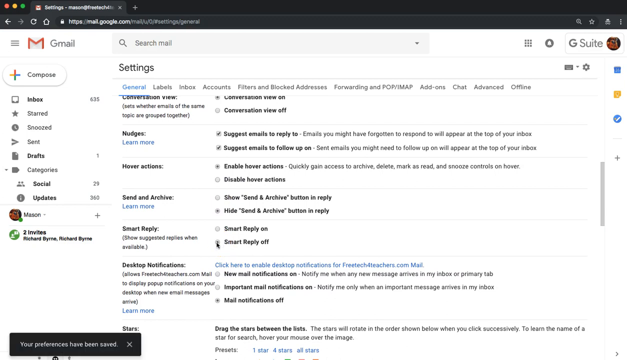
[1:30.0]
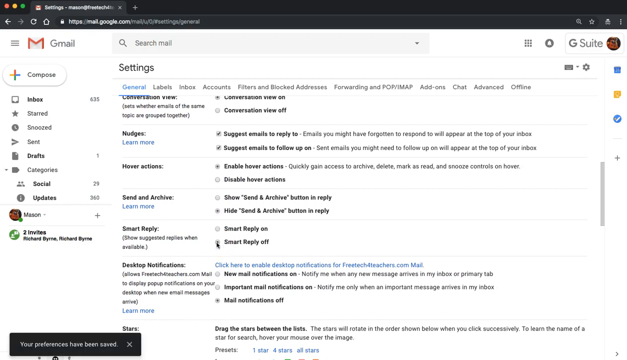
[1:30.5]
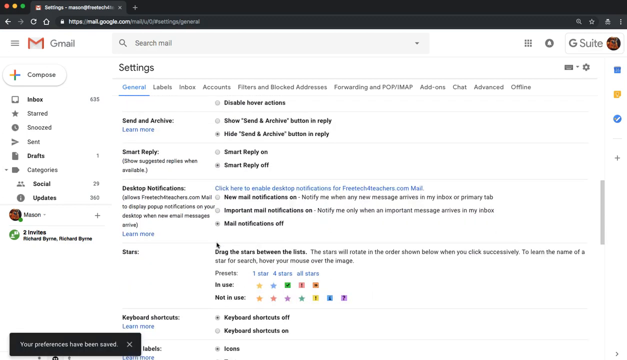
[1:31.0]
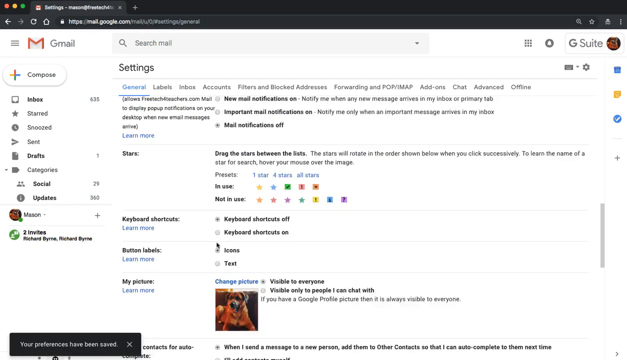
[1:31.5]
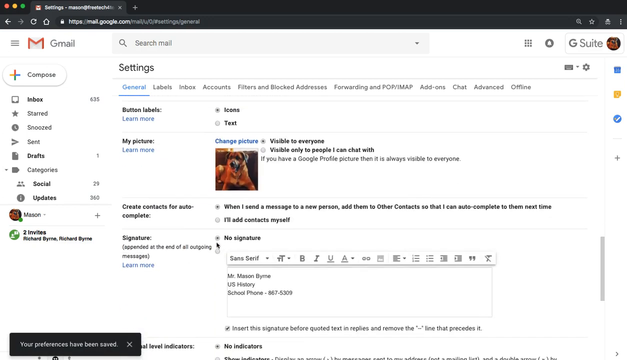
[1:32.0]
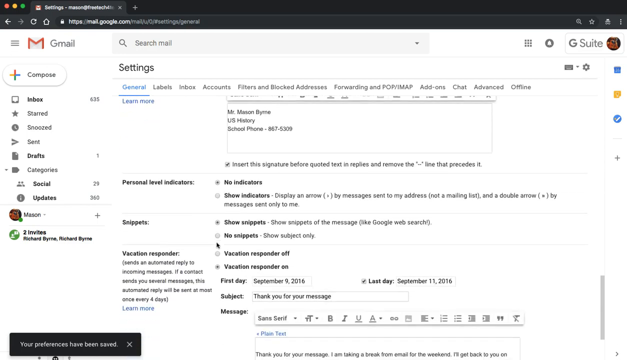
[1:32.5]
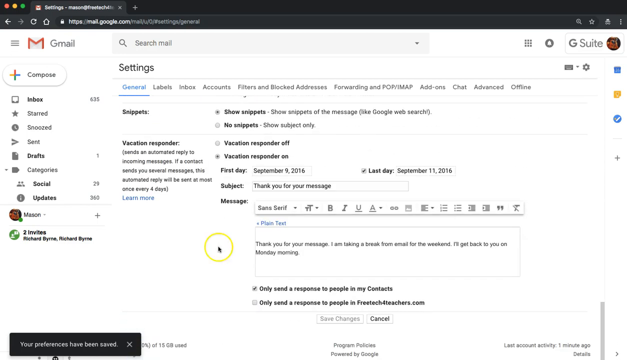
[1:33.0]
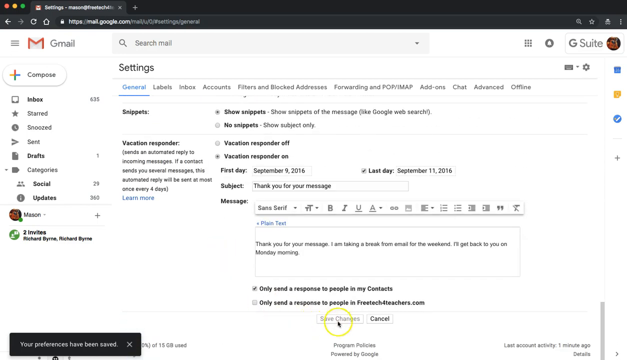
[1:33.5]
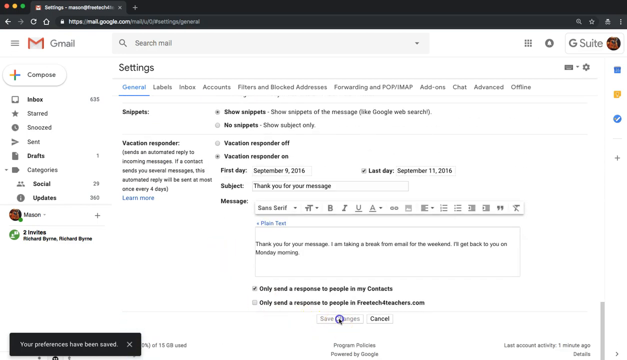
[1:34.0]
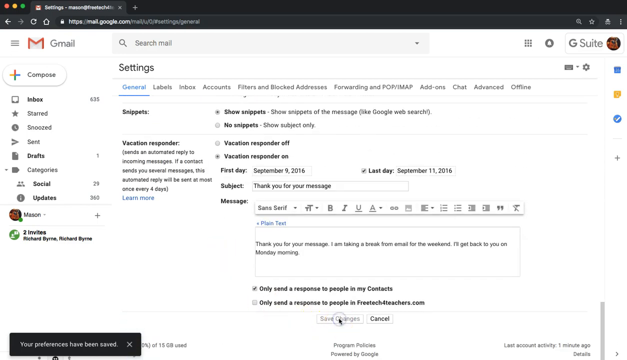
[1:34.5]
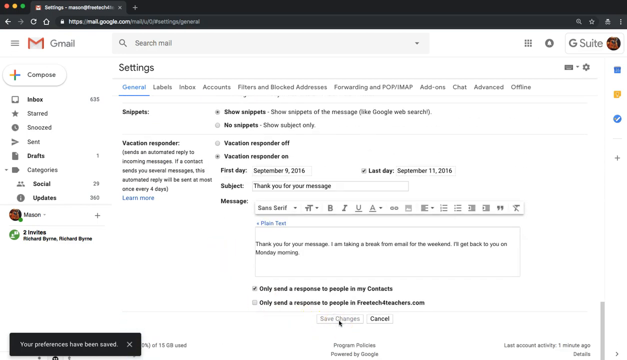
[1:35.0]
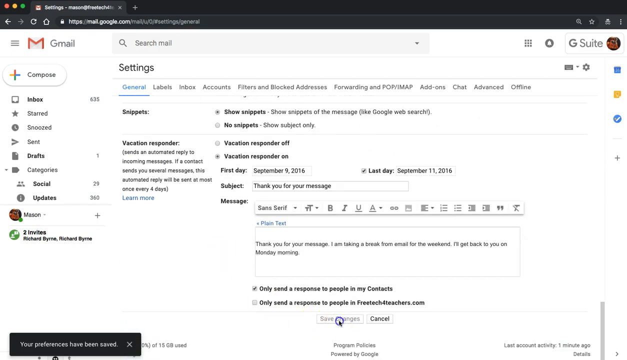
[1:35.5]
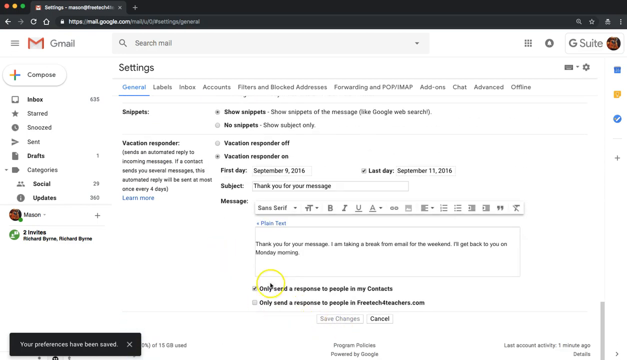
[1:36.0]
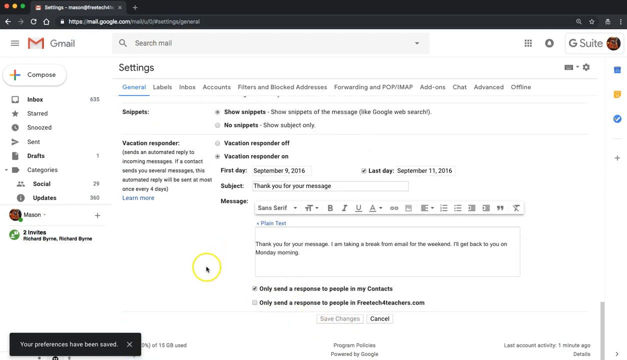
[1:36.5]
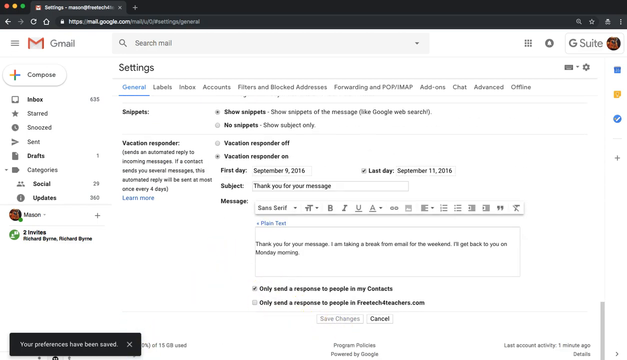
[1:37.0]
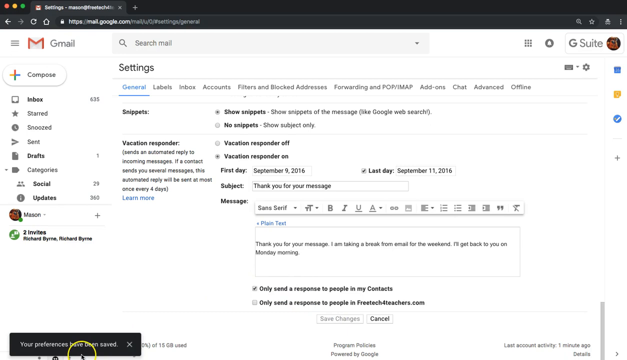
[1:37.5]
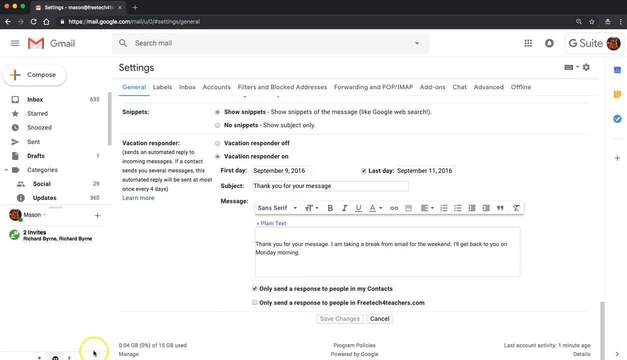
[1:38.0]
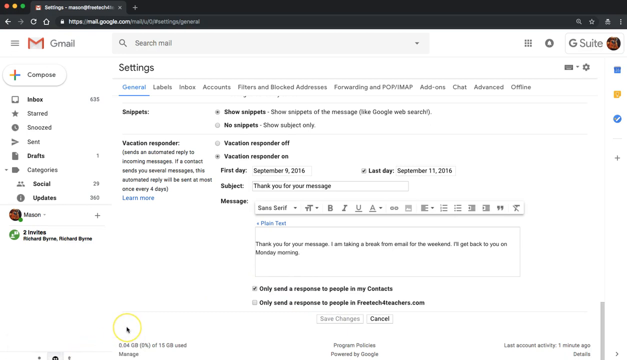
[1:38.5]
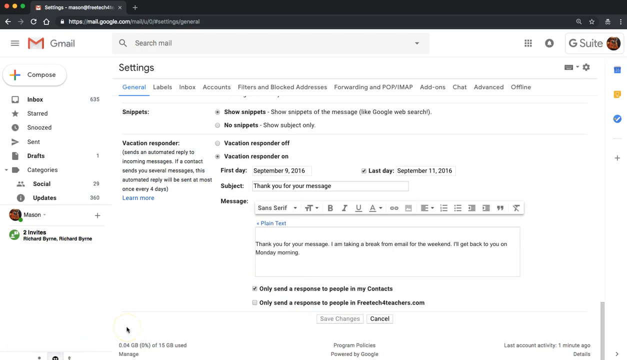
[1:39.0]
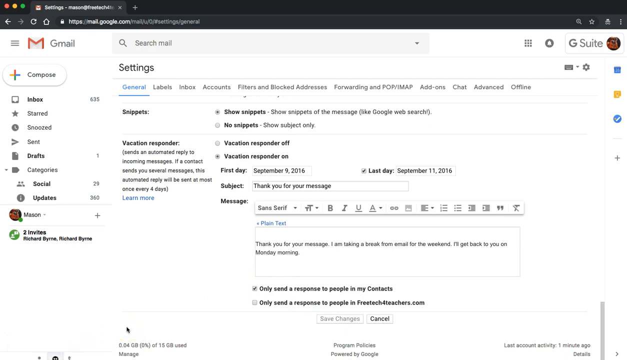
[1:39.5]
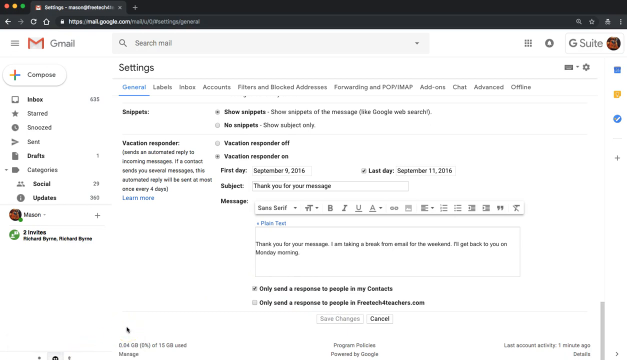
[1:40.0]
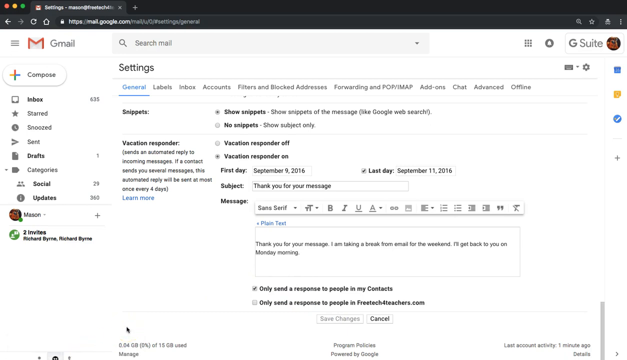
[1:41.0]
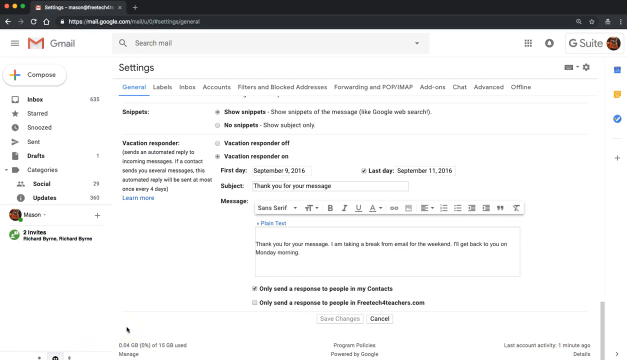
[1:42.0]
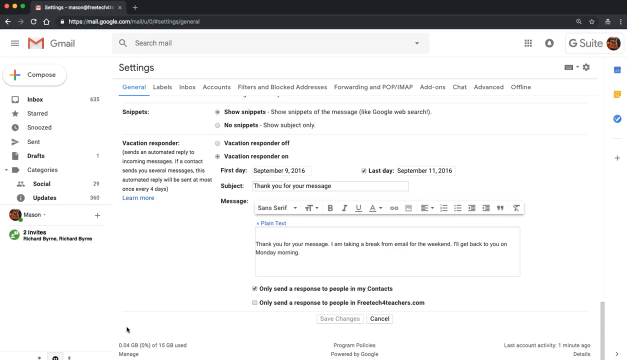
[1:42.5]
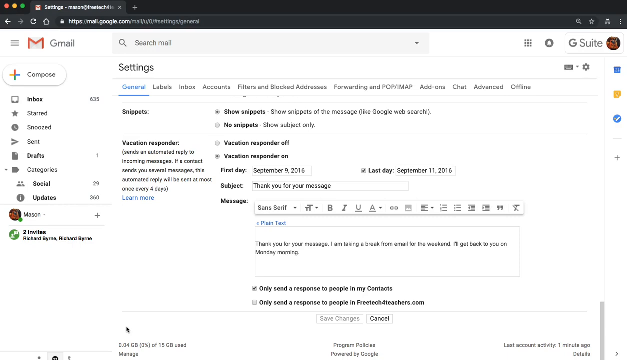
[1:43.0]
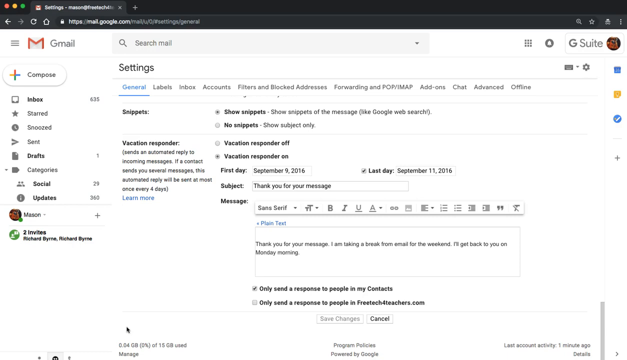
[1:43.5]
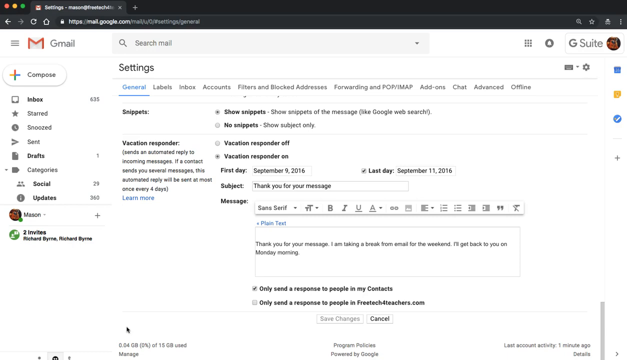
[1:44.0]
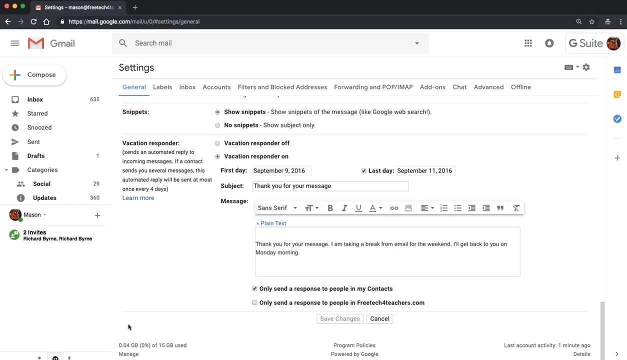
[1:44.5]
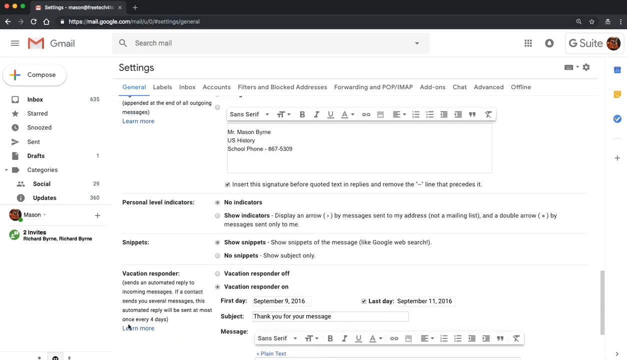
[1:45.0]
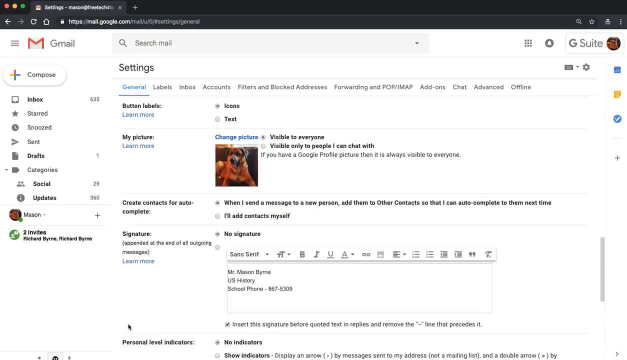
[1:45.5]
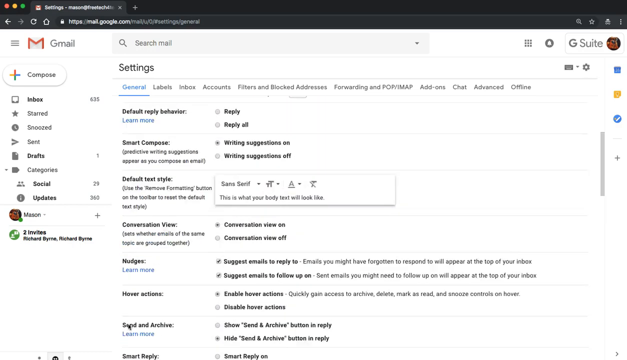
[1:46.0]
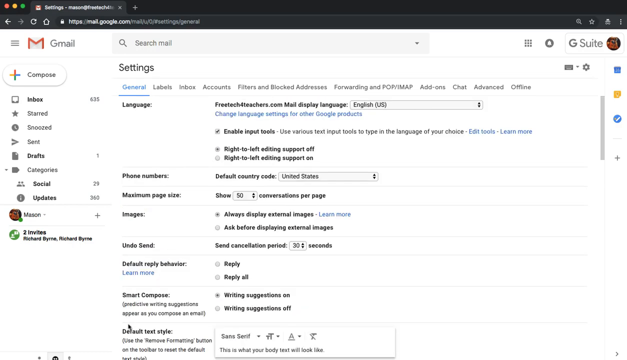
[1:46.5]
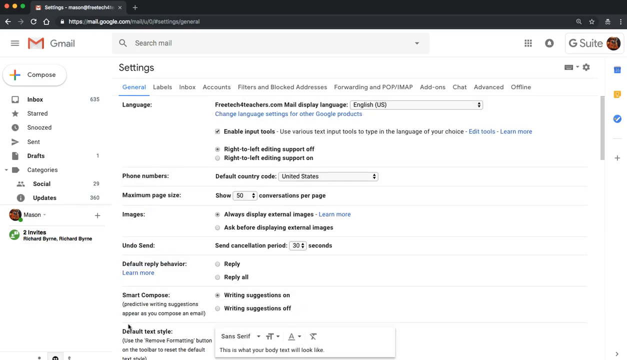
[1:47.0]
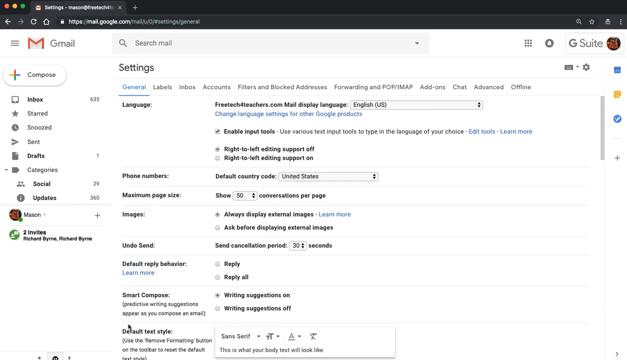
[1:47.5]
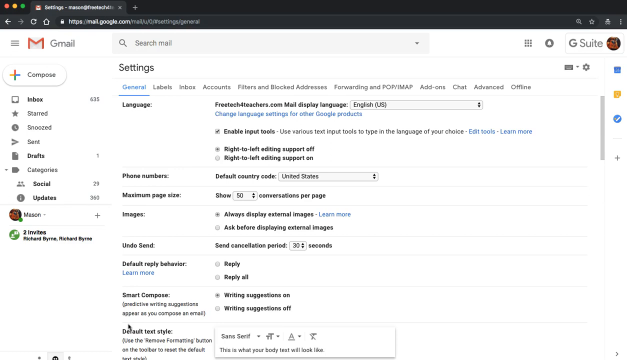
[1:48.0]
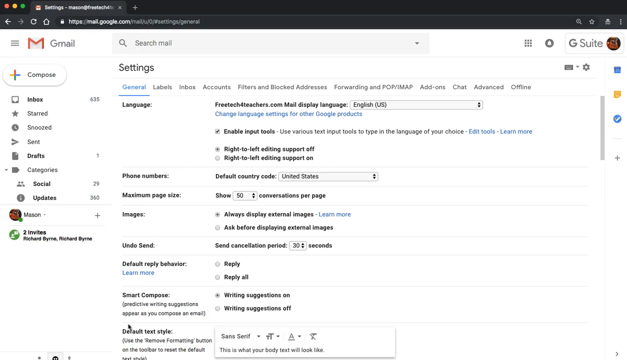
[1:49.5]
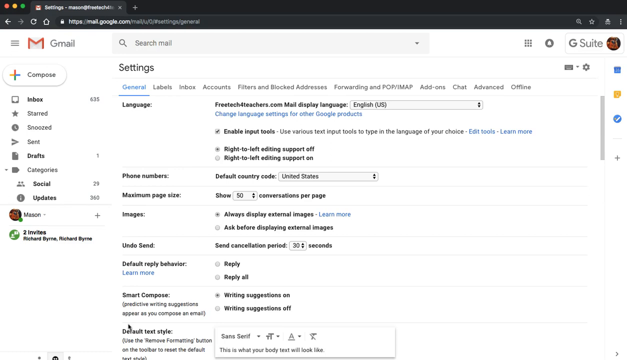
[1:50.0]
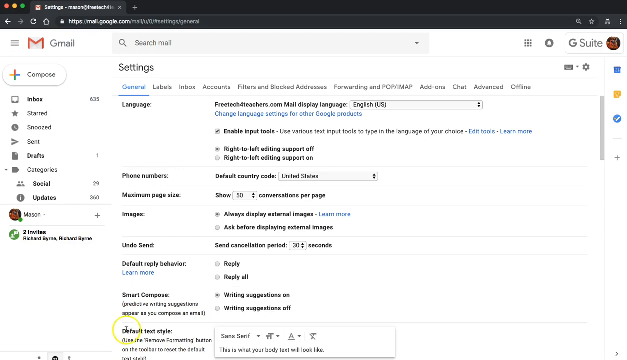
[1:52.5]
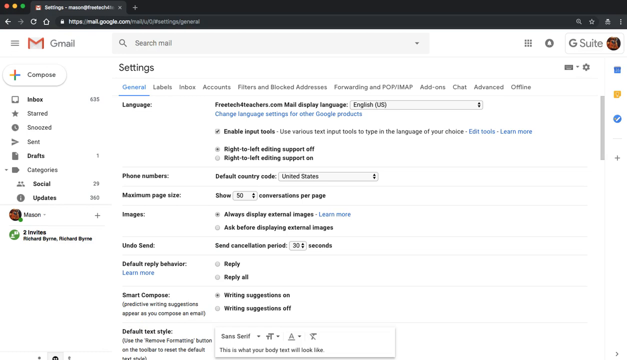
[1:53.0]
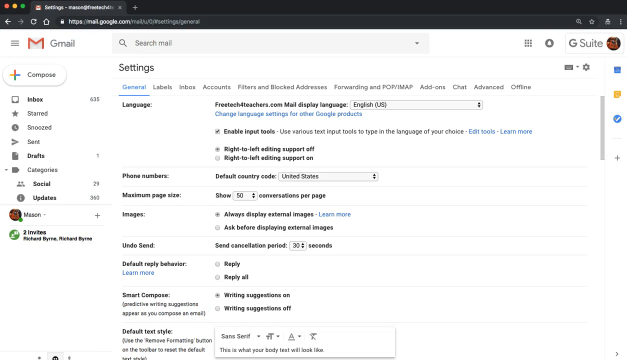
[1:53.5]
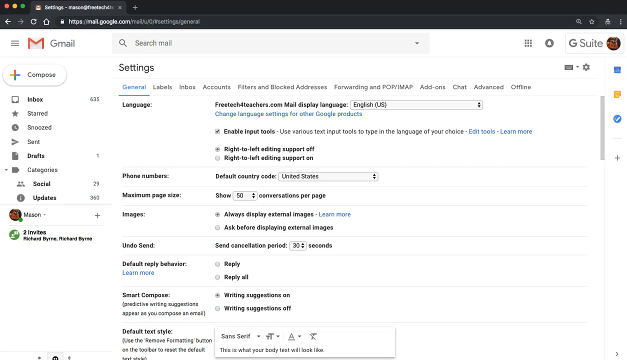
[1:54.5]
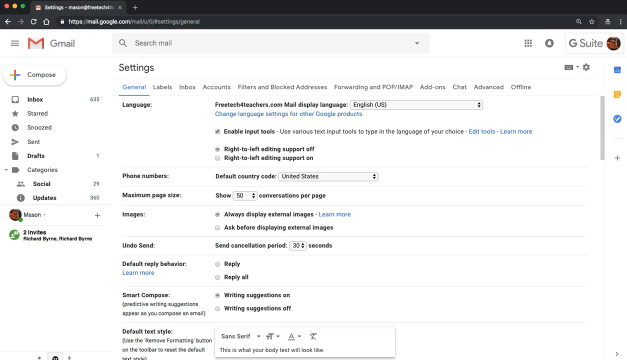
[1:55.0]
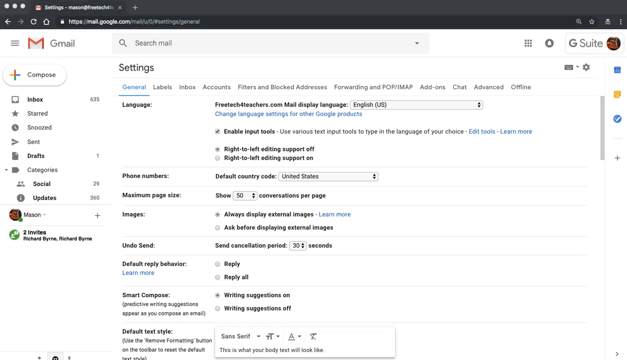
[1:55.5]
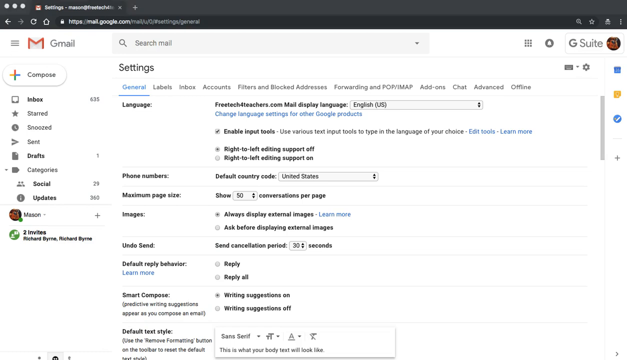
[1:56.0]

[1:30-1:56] The screen capture shows someone changing the settings for their Gmail email. At the top of the page is language, followed by phone number, maximum page size, images, undo send, and default reply behavior as they quickly scroll down the page. At the bottom are snippets and vacation responder, which they edit. They edit the message: "thank you for your message. I am taking a break from email for the weekend. I'll get back to you on Monday morning". They select the option to turn the vacation responder on and set the days for the weekend. The subject says "thank you for your message", and the box "only send a response to people in my contacts" is checked. After editing, they appear to save the changes, scroll back up to the top of the page, and wait there for a moment before the video ends.